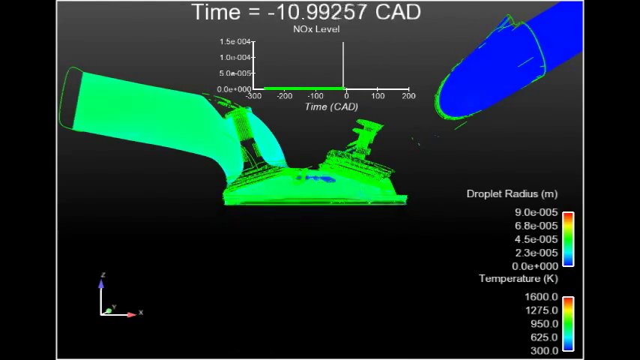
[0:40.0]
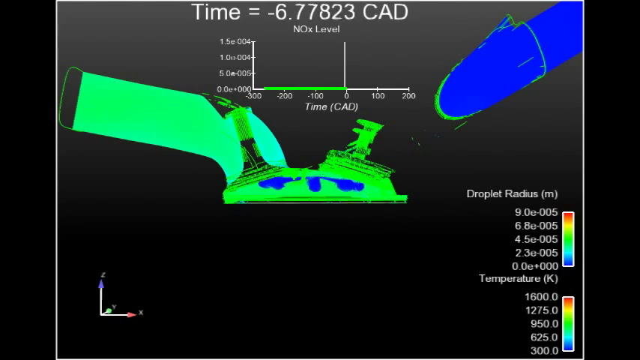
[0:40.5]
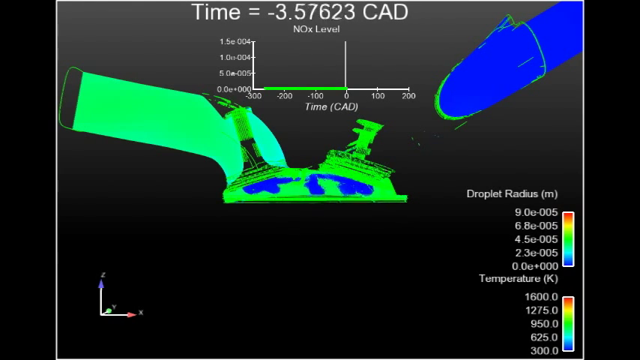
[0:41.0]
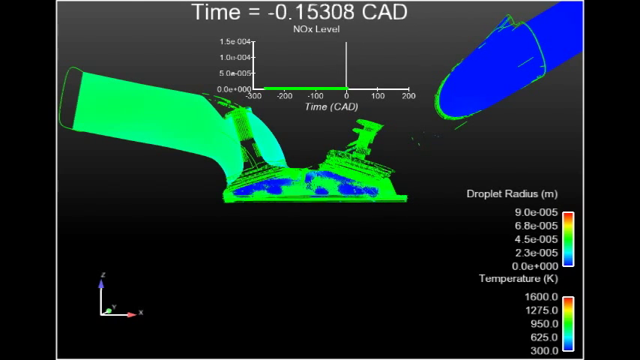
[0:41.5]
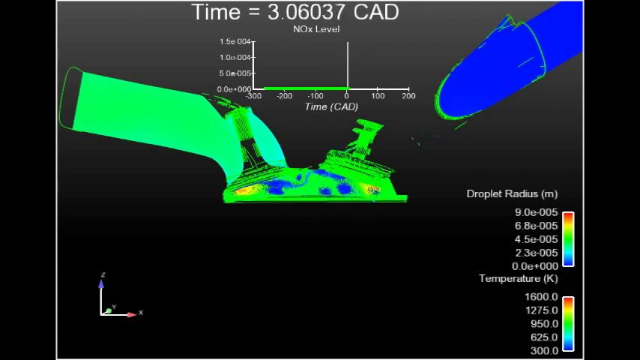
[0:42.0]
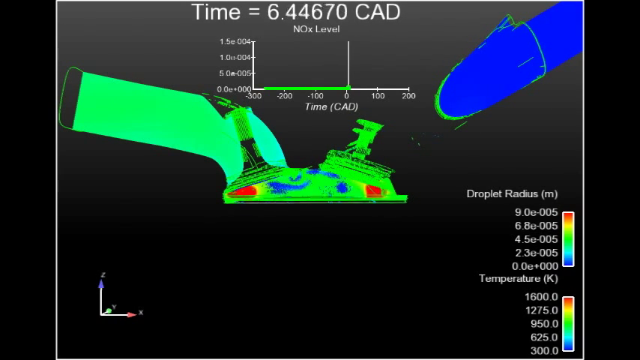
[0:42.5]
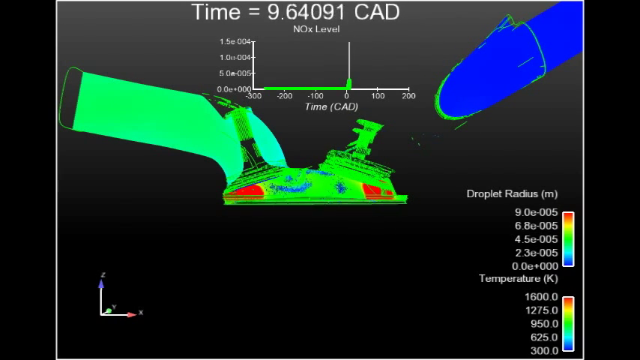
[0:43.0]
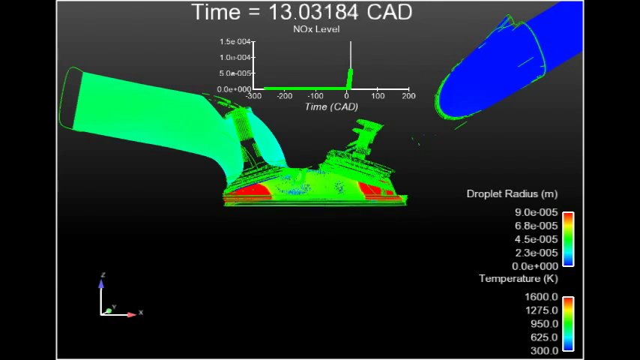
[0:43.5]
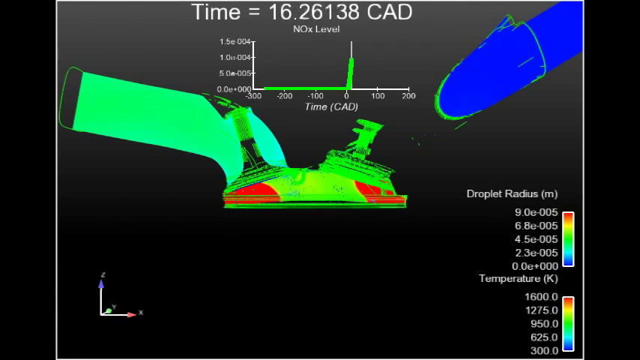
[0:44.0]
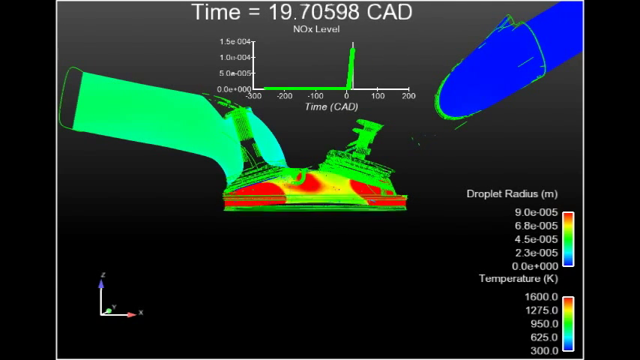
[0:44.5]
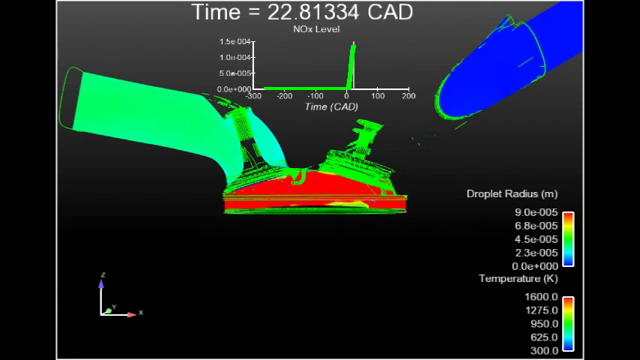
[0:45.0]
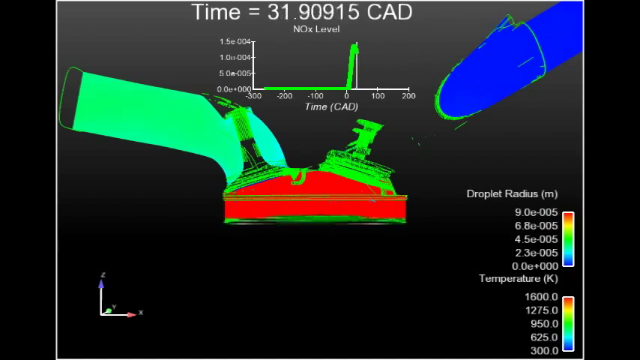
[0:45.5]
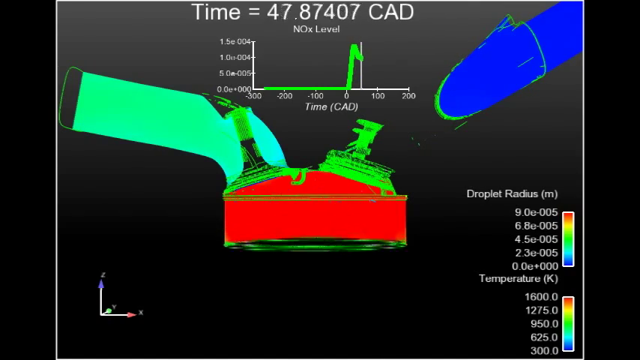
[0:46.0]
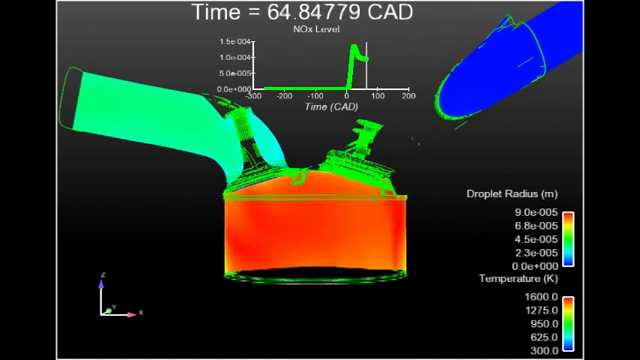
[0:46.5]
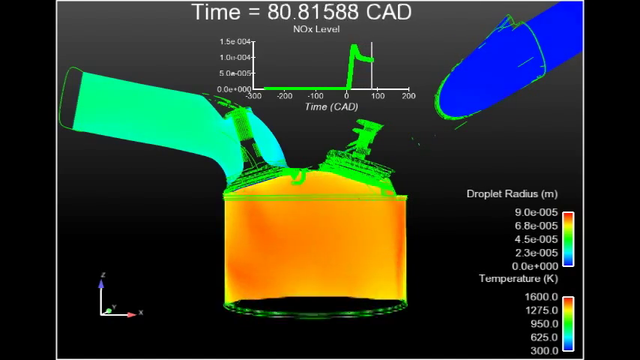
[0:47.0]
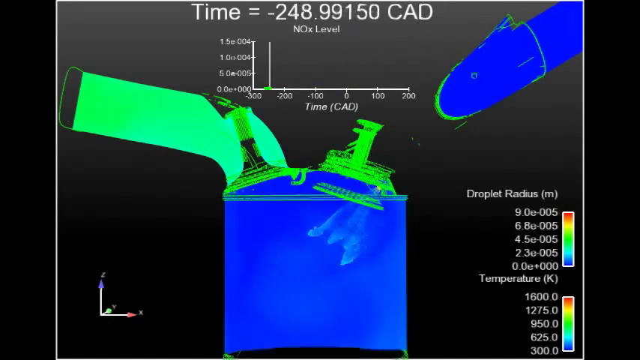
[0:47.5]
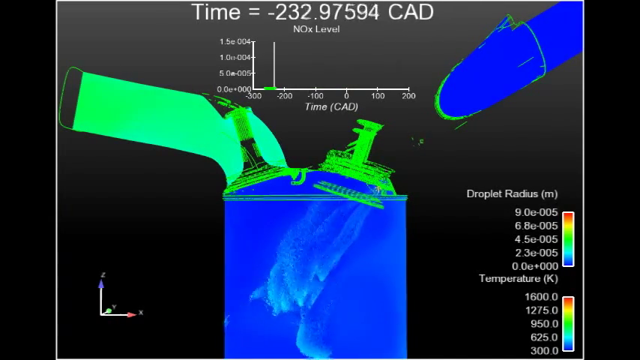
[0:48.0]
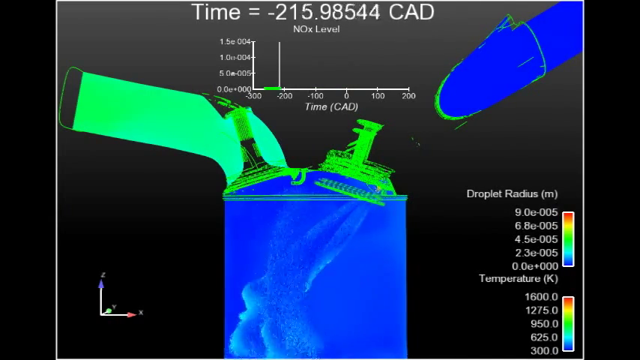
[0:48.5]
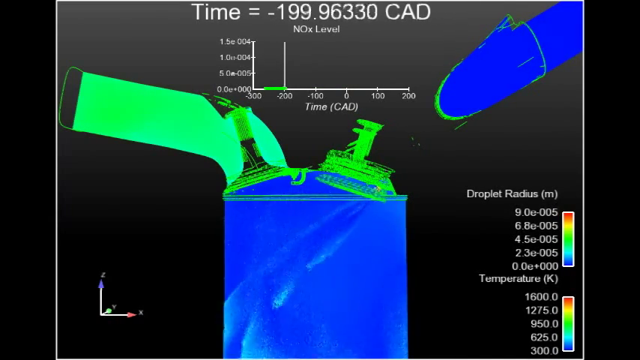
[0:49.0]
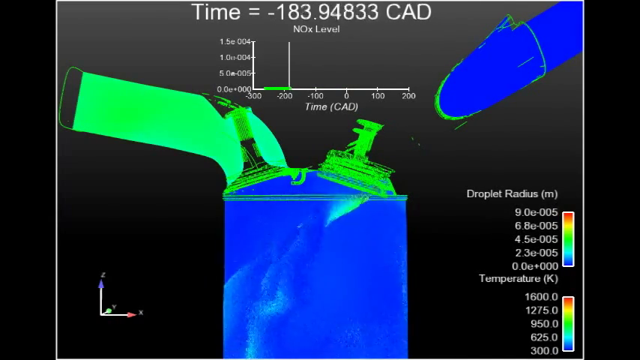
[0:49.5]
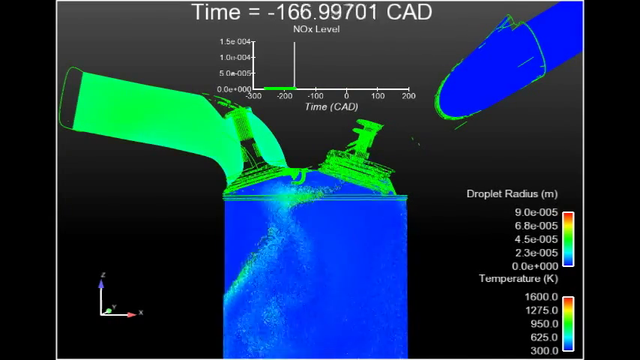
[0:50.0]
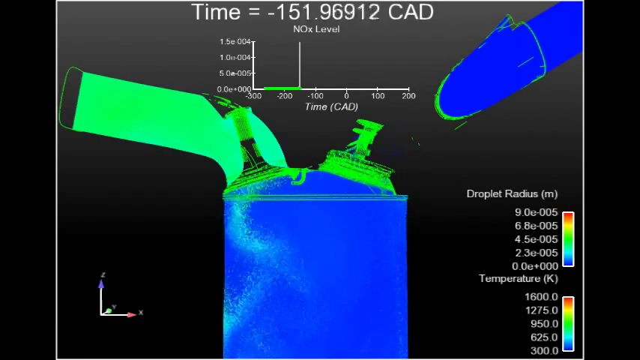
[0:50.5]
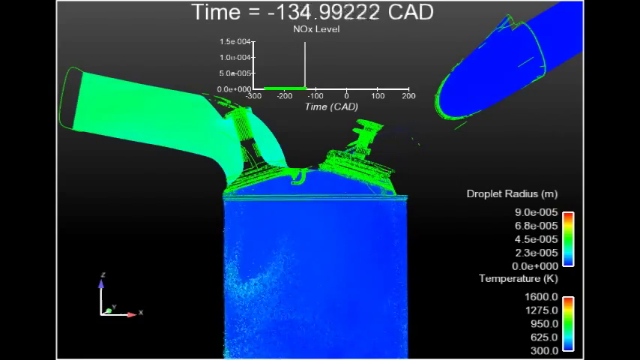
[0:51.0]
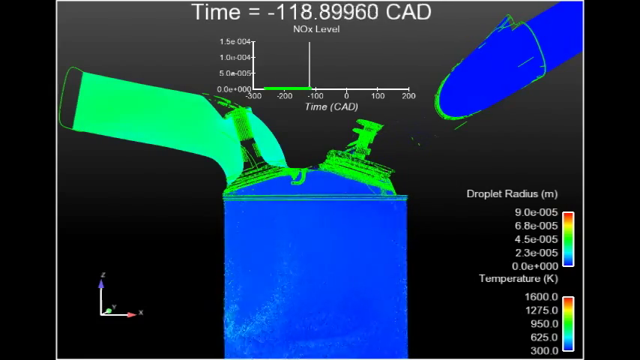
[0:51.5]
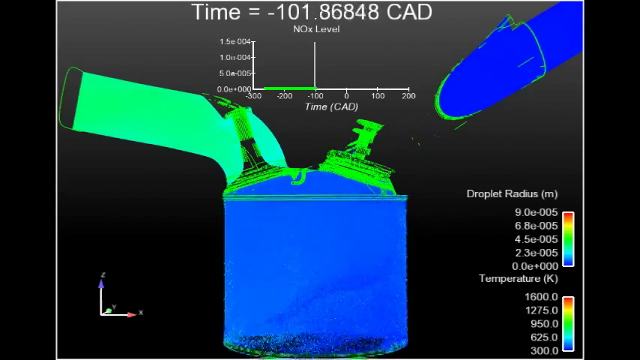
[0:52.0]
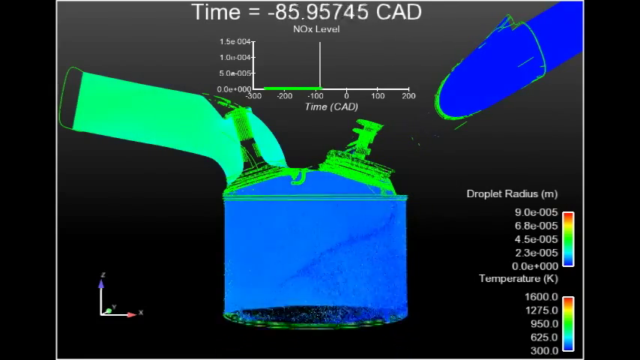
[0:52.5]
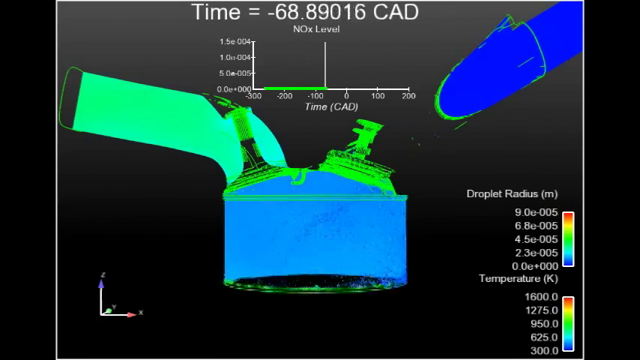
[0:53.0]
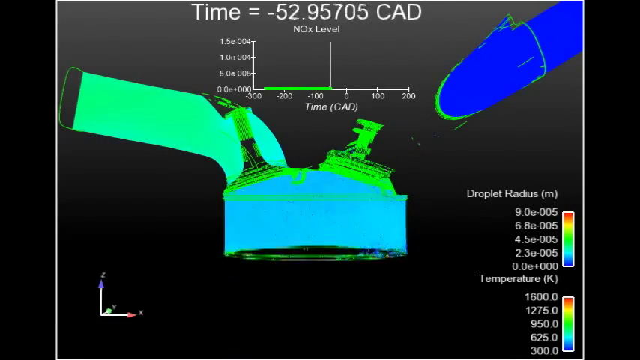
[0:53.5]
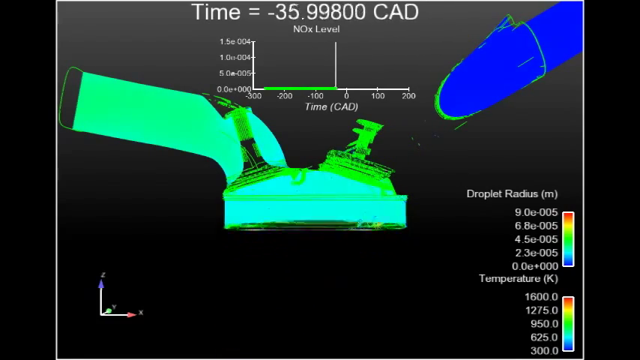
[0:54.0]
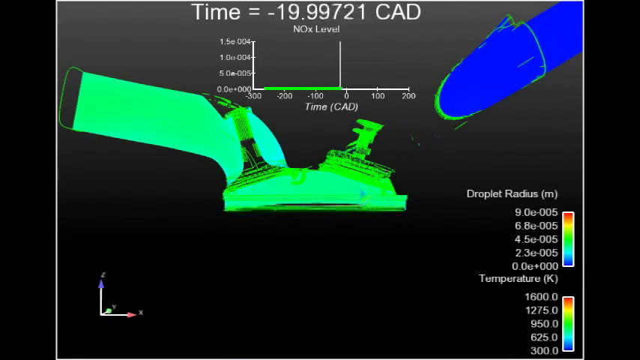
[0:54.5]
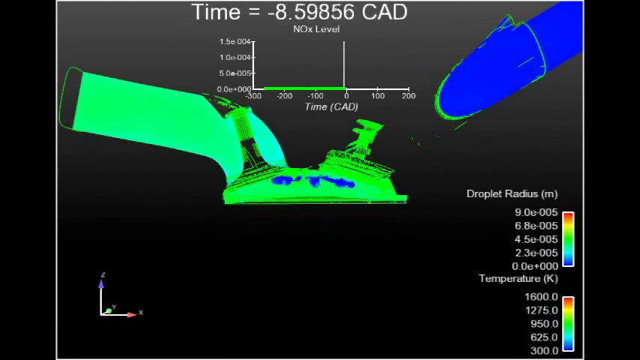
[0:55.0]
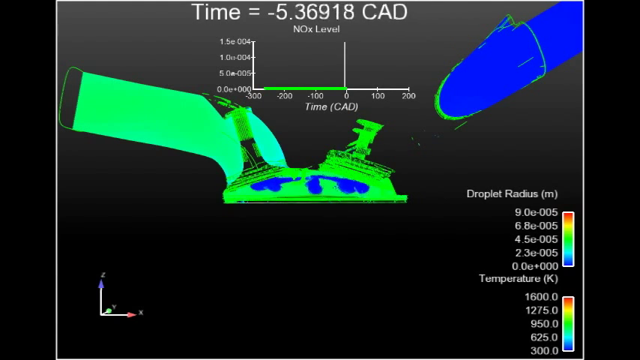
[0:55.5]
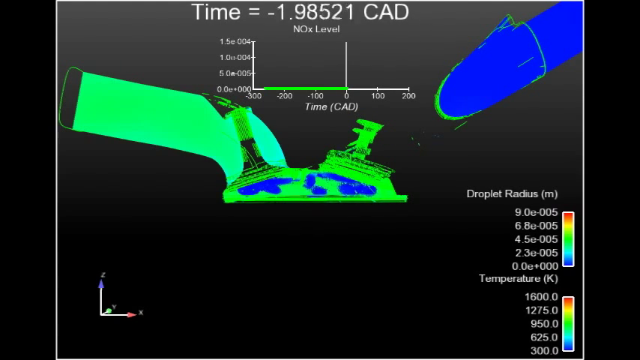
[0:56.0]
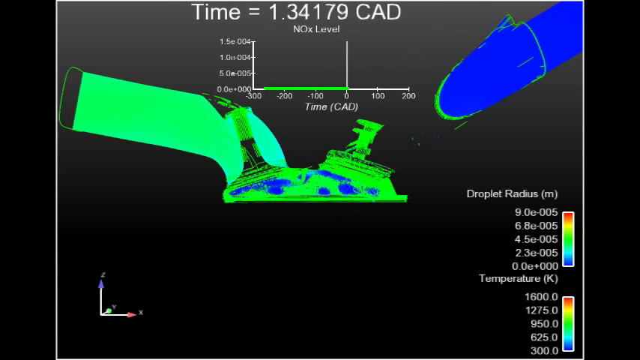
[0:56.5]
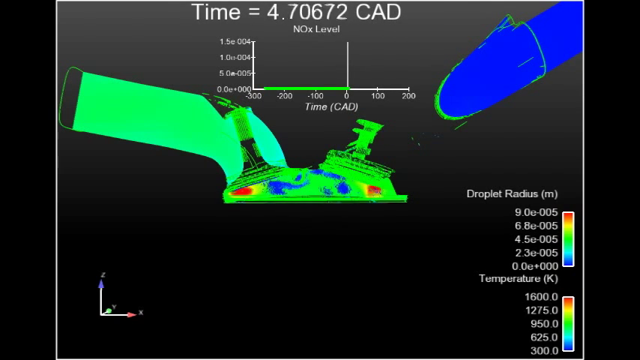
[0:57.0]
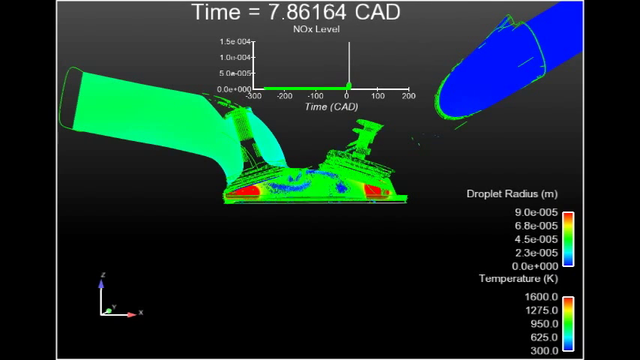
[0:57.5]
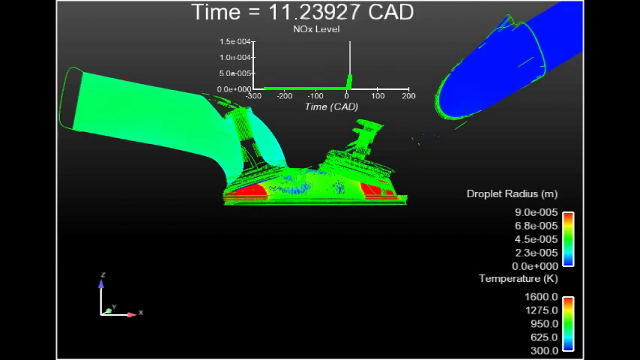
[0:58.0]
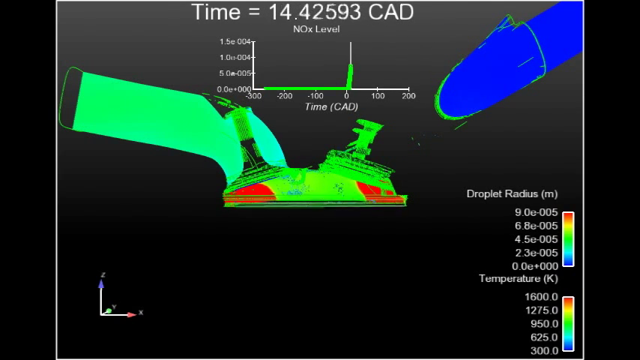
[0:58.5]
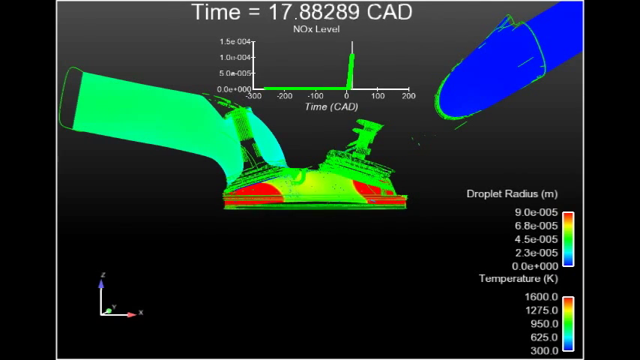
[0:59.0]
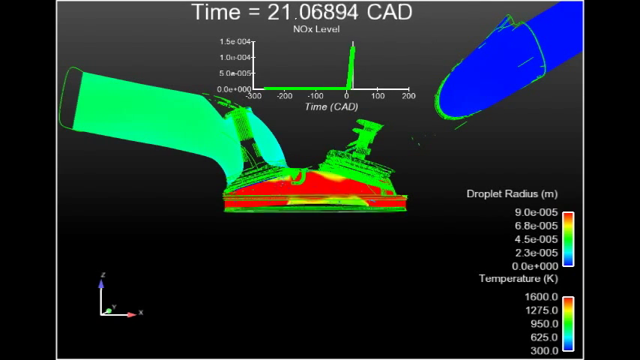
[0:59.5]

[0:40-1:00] The same combustion engine graphic continues. What looks to be the cylinder or main part of the engine, shown in green and blue, is a large canister, with a blue oblong shape at the top right corner of the screen and a green tube-like shape coming out of the top of it and moving to the left, possibly representing the fuel intake and exhaust. A blue mist appears in the main part of the cylinder, and at a certain point it transitions to red, apparently representing the combustion taking place within the engine or motor. The timer at the top appears to be counting down.